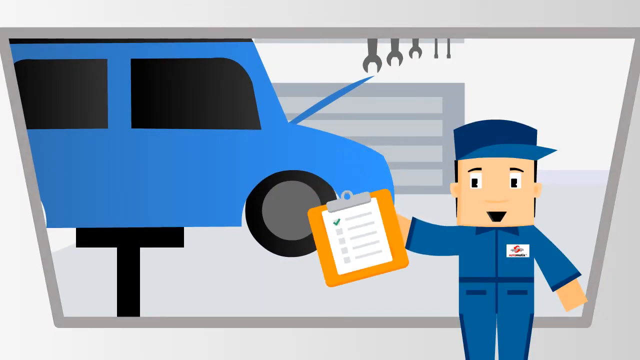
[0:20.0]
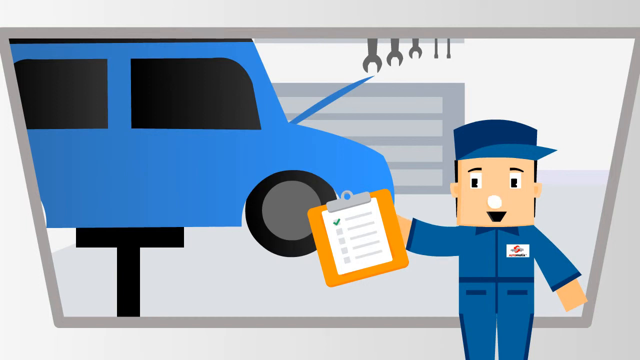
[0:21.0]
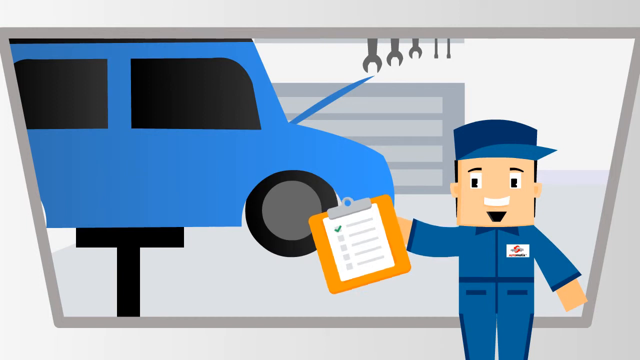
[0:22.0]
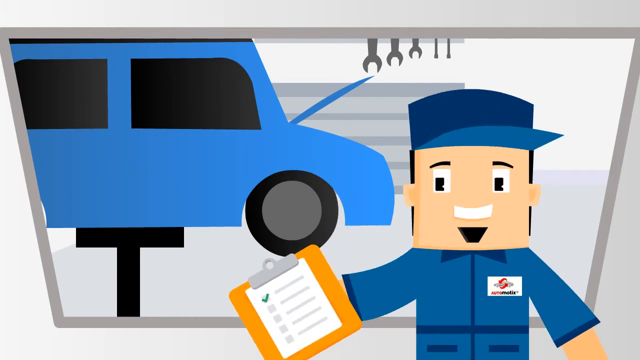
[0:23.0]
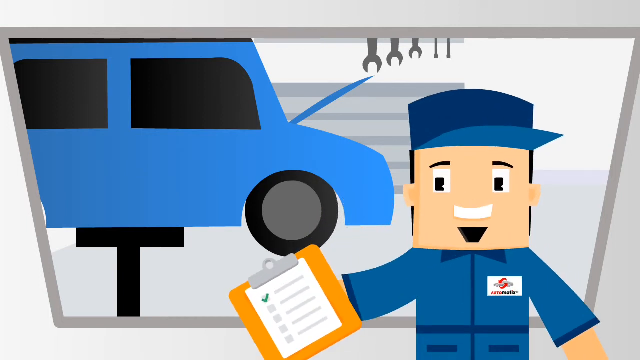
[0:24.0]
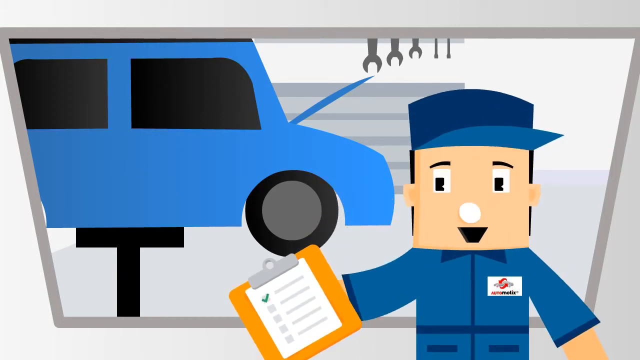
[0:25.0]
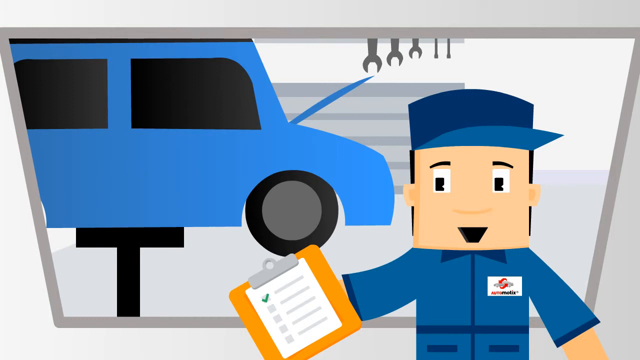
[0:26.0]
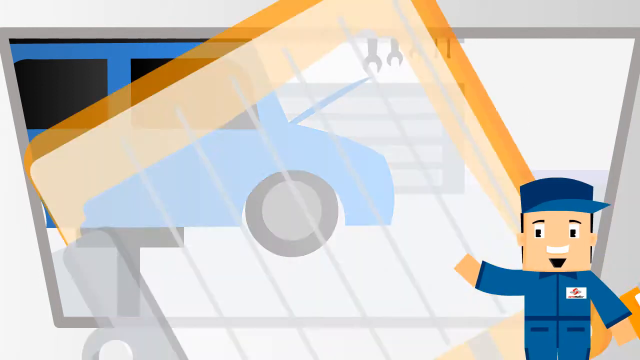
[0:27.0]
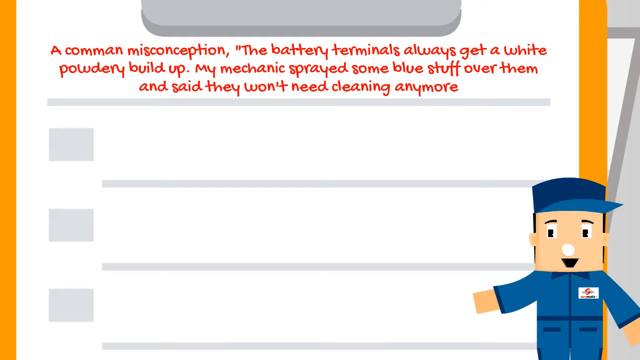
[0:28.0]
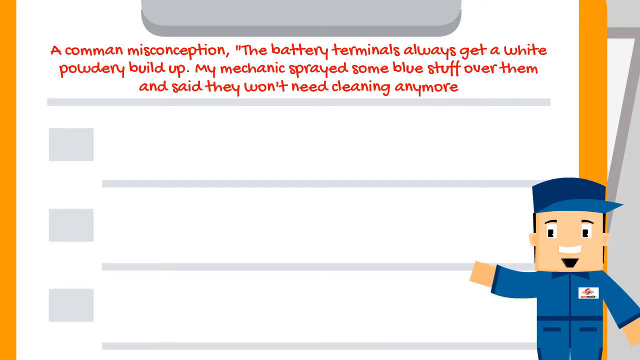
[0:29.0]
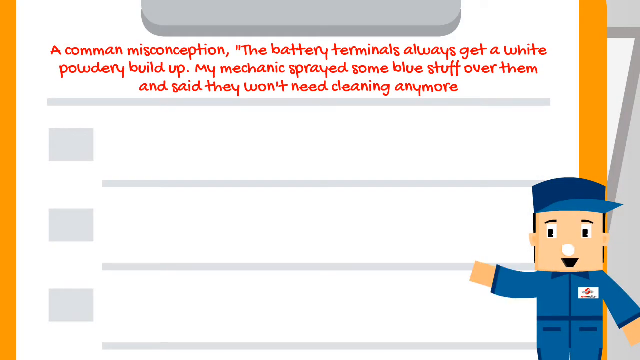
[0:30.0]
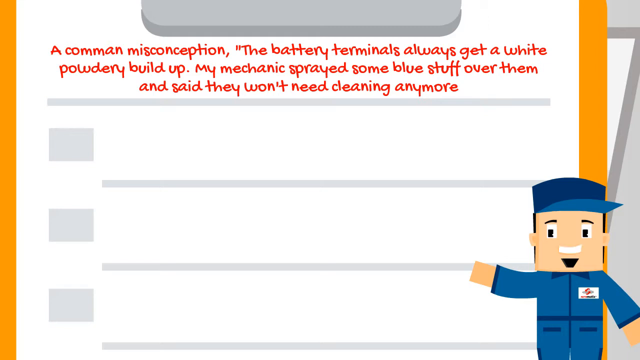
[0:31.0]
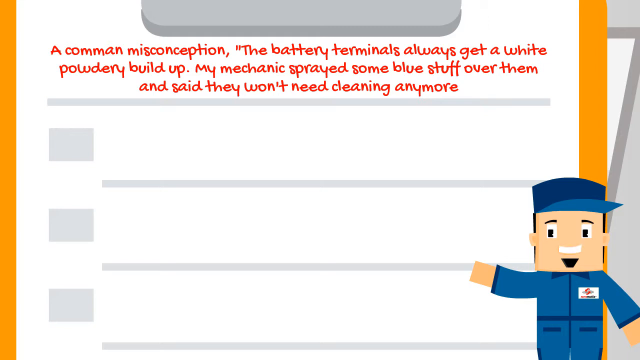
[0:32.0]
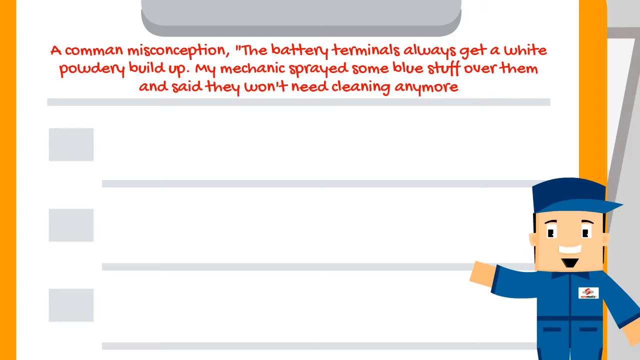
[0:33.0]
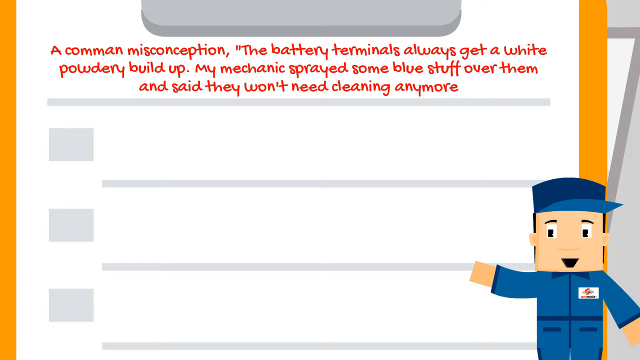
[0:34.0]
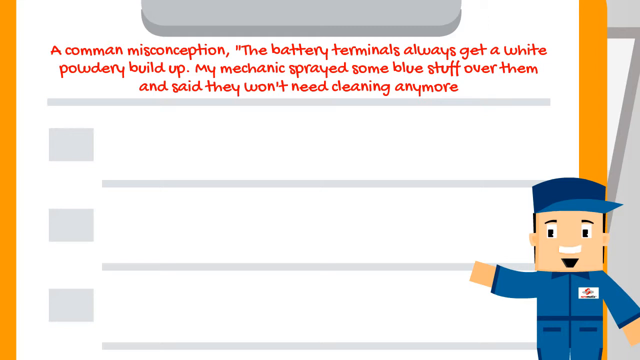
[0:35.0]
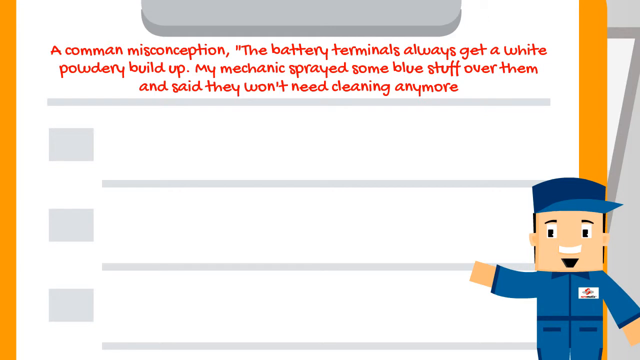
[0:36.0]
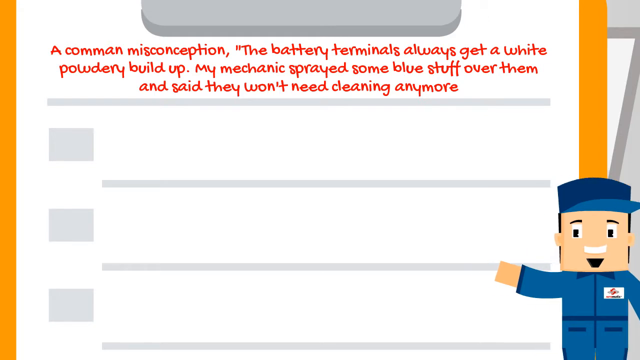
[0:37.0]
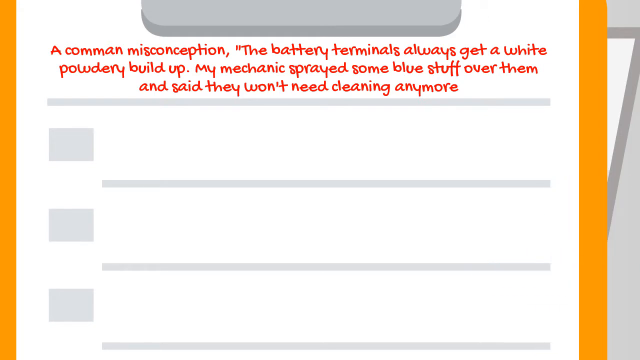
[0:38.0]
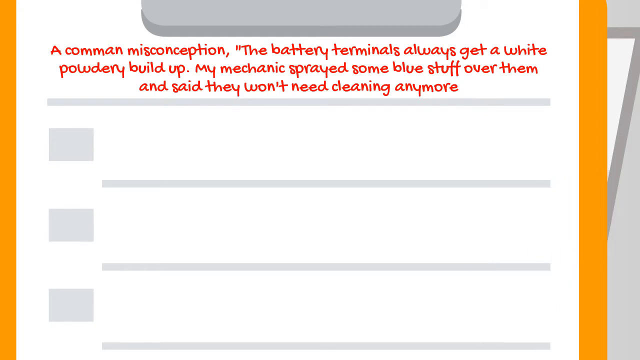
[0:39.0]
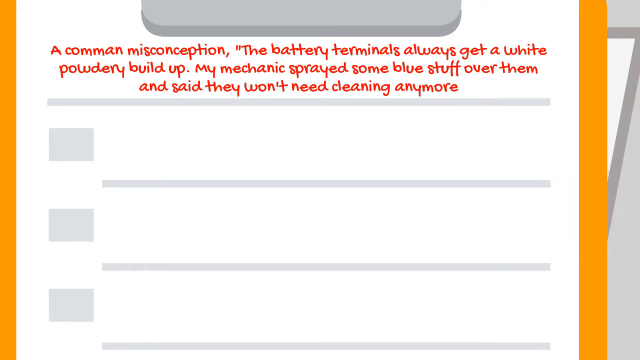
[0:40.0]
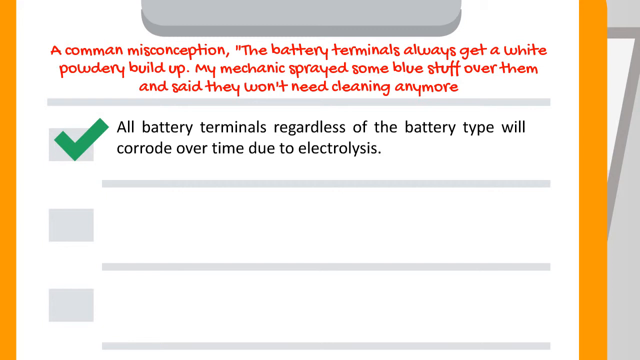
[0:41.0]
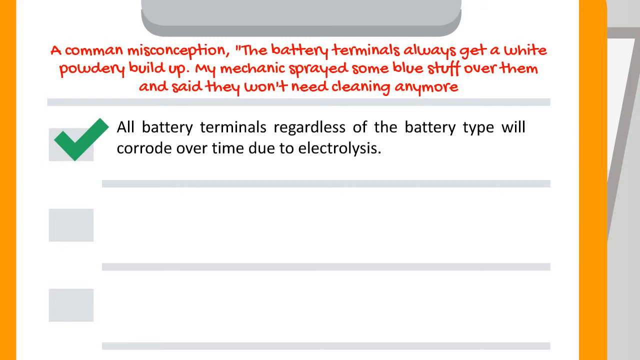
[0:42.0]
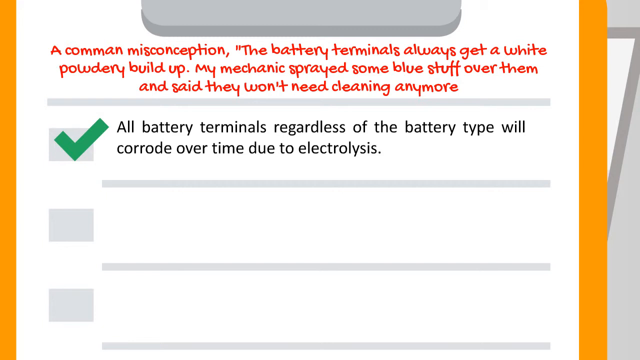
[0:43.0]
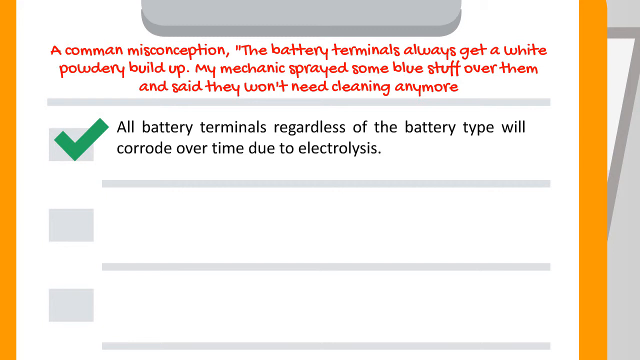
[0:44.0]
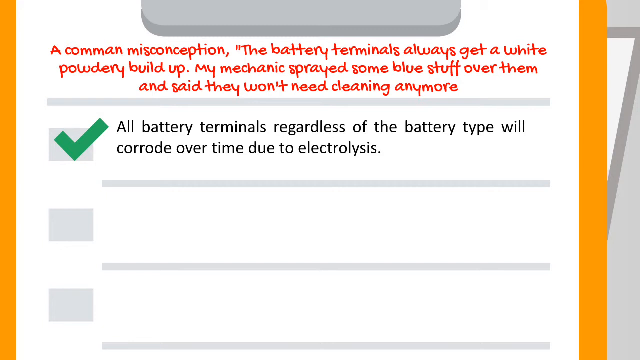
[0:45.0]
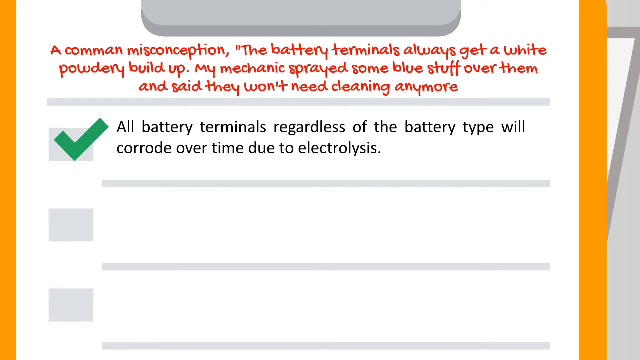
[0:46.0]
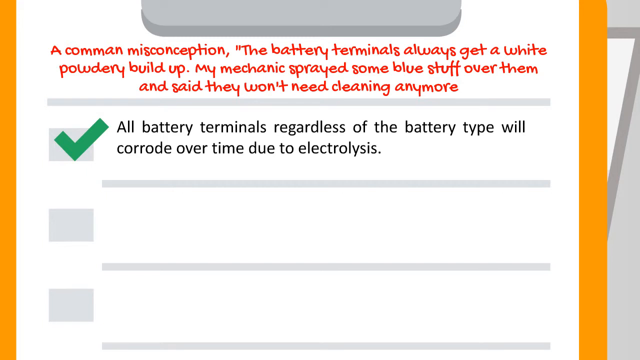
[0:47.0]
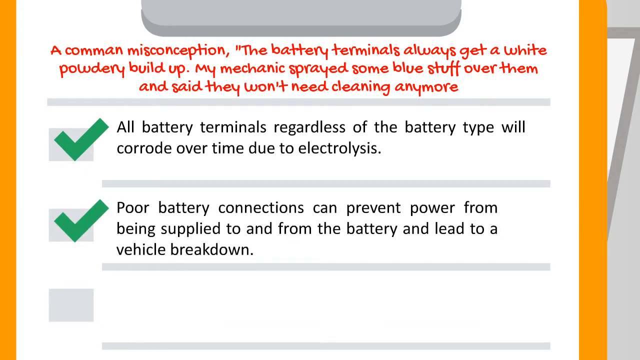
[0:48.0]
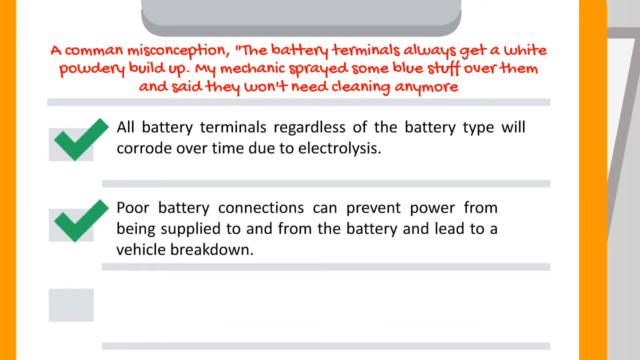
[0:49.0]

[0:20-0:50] A drawing shows a man in a blue outfit with a blue cap, suggesting a sort of uniform, carrying a clipboard with a checklist whose top item is checked. Behind him a car is lifted up on what looks like a hydraulic lift, suggesting a mechanic's bay where they are working on the car. The mechanic speaks to the viewer, comes a bit closer, and continues speaking. Then his checklist spirals and becomes very large so that its contents can be read. At the top it reads "a common misconception. The battery terminals always get a white powdery buildup. My mechanic sprayed some blue stuff over them and said they won't need cleaning anymore." The mechanic remains small in the bottom right-hand corner of the screen, still speaking about the checklist. He slides out of frame, and then a green check appears next to an item that says "all battery terminals, regardless of the battery type, will corrode over time due to electrolysis." Then another green check appears next to a message that says "poor battery connections can prevent power from being supplied to and from the battery and lead to a vehicle breakdown."